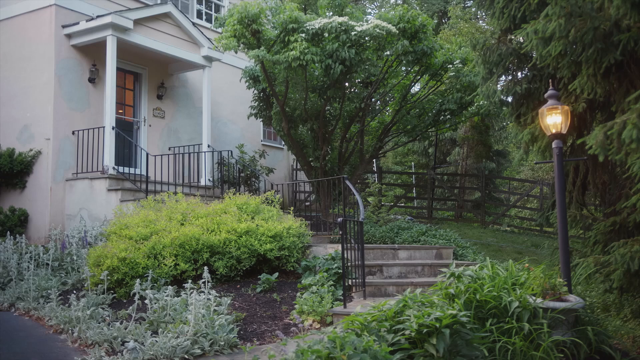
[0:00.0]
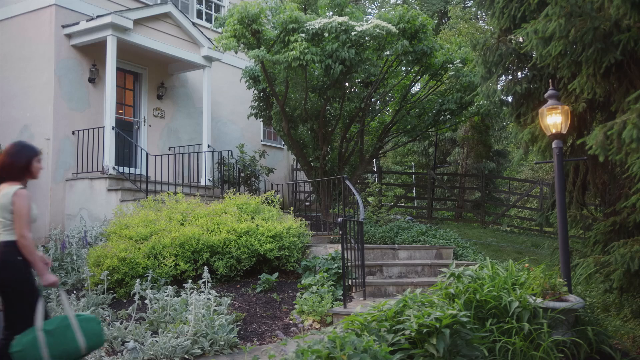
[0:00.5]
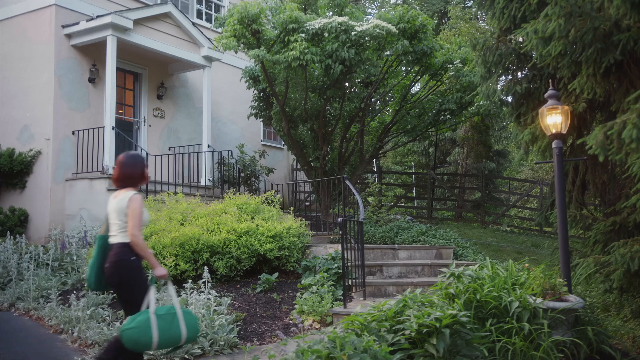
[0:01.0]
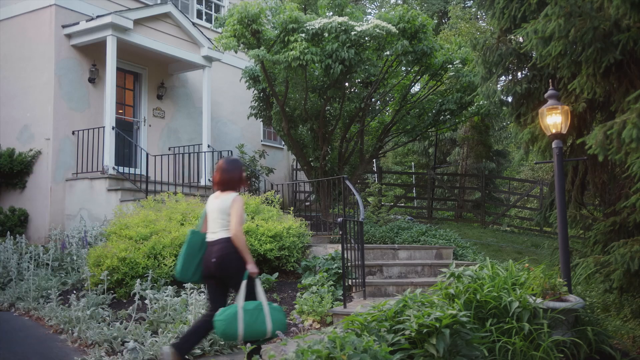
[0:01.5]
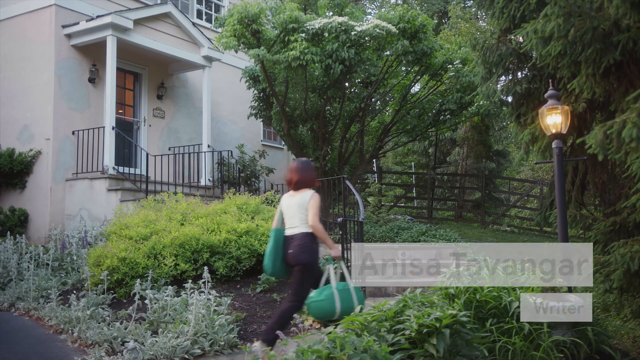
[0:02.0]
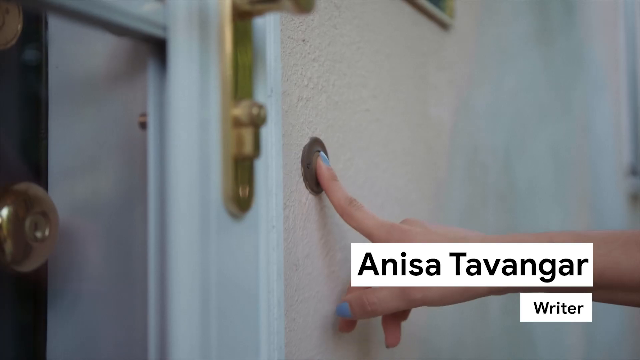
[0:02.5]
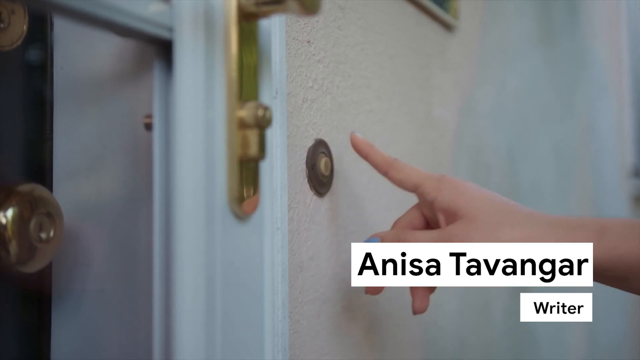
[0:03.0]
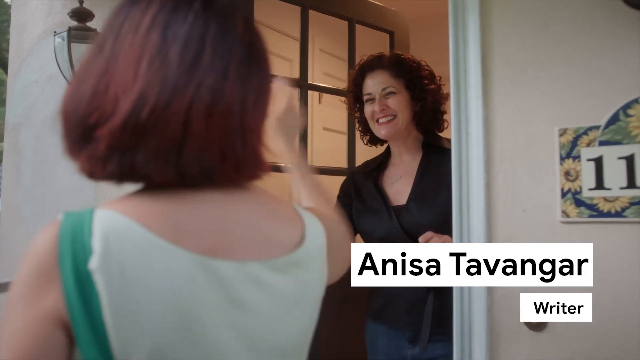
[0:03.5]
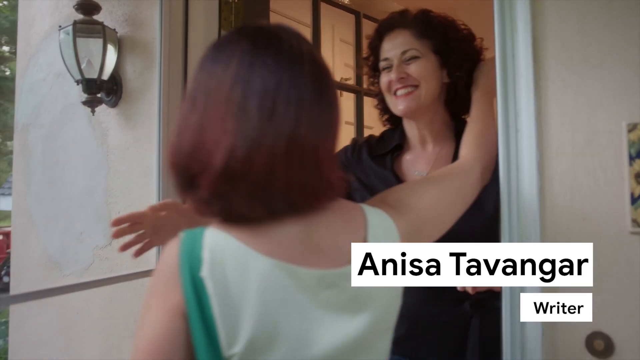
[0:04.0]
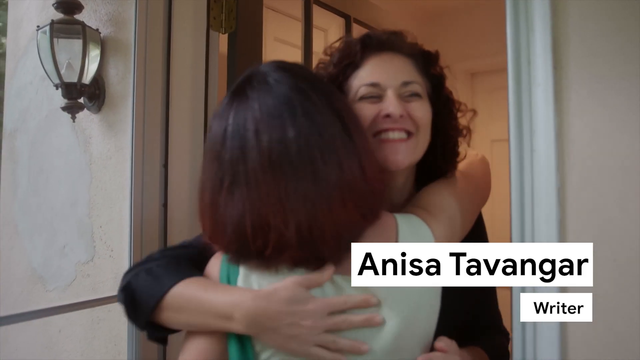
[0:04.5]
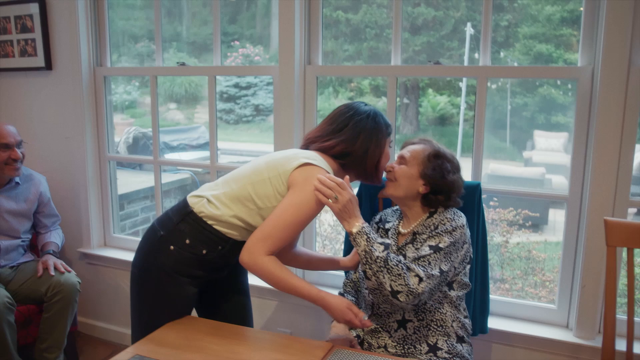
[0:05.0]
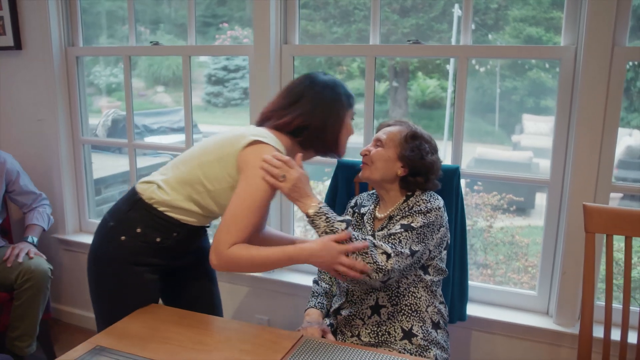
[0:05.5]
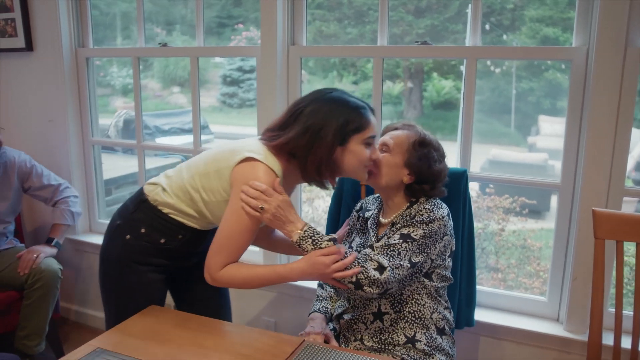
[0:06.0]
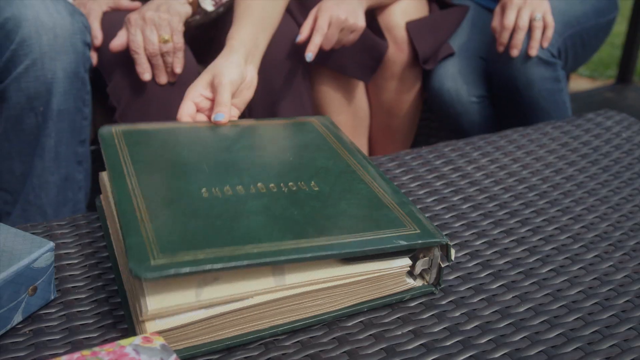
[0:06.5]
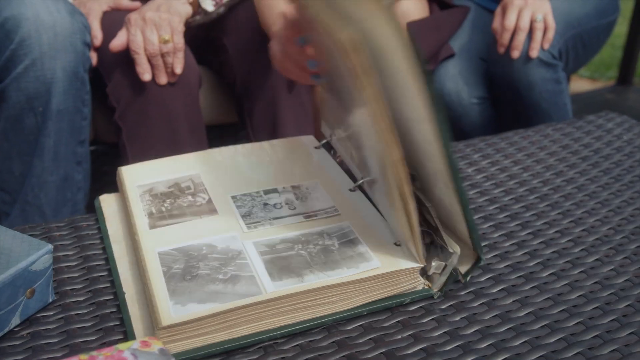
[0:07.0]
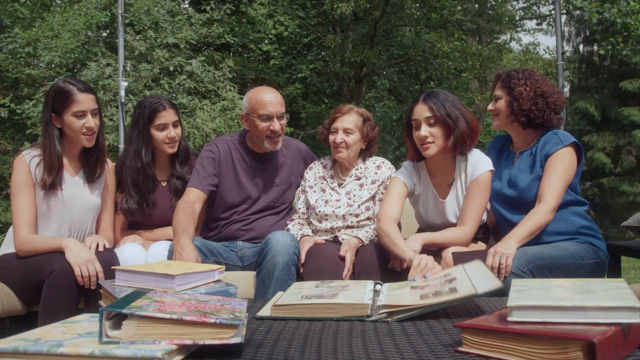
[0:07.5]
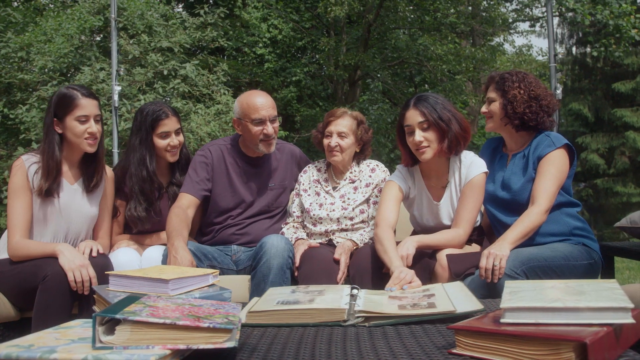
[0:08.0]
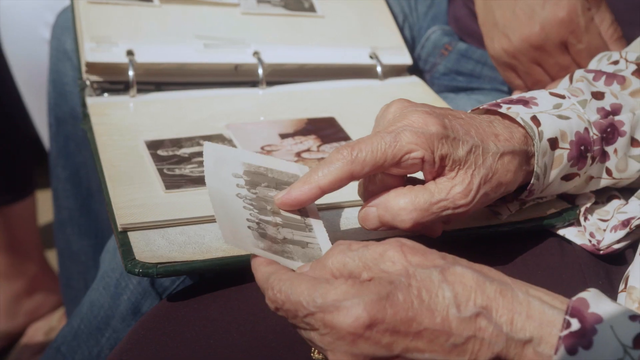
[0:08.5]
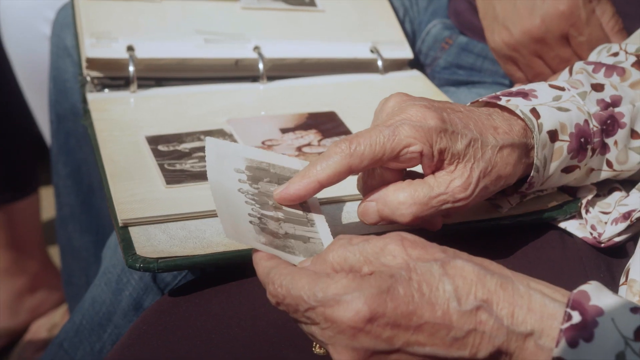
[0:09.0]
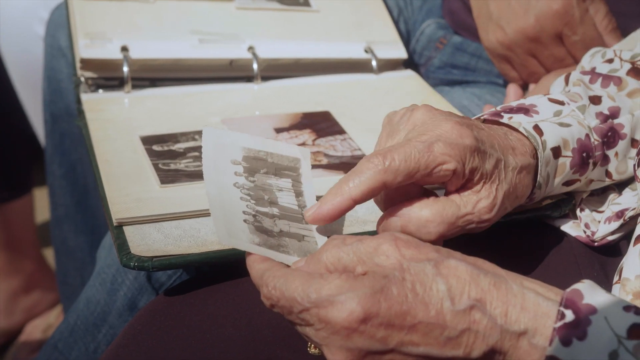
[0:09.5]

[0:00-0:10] A young woman, possibly in her early 20s, walks up some stairs outside a white house surrounded by a lot of greenery and a lamppost. She wears a white off-the-shoulder top with black jeans and carries a green duffel bag in her right hand and a green tote bag over her left shoulder. She goes up to the house and rings the doorbell, and a woman in her 50s opens the door and hugs her. The young woman's name appears on the screen: "Anissa Tavangar-Writer". Inside the house, she kisses an older woman in her 60s to 70s who is sitting at a table in front of a large window, possibly in the living room, giving her a kiss on both cheeks. Other people are sitting next to the older woman, who wears pearls and a black and white dress. The scene then cuts to a group of people outside, maybe in the backyard. There are six people in this scene, and the young woman opens an old green photo album on a table surrounded by many photo albums.